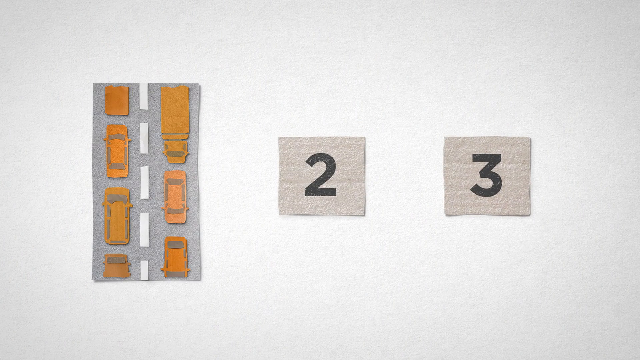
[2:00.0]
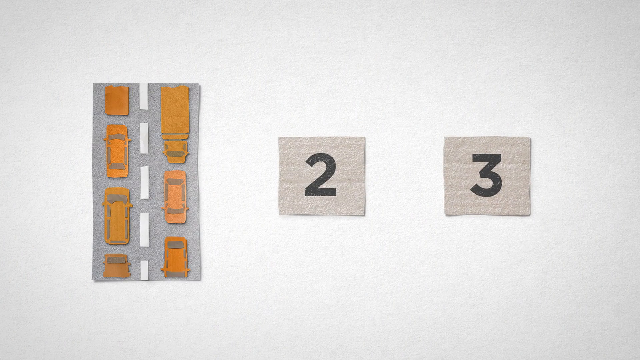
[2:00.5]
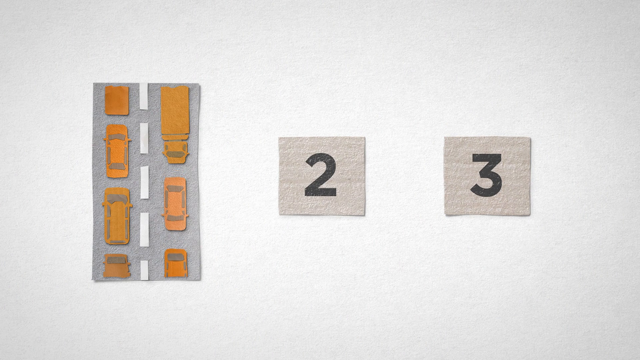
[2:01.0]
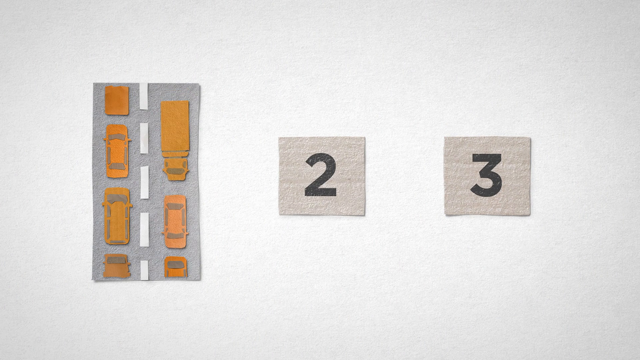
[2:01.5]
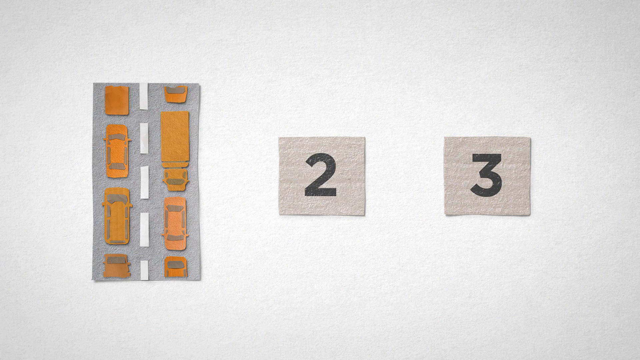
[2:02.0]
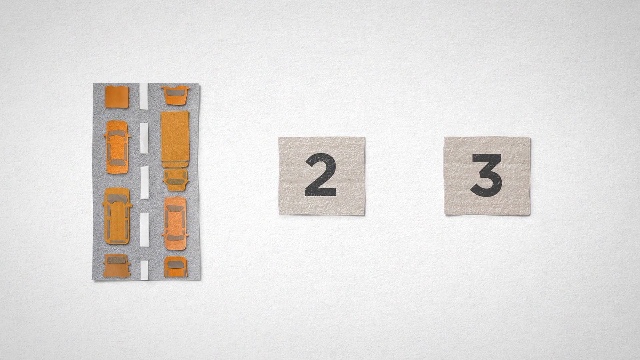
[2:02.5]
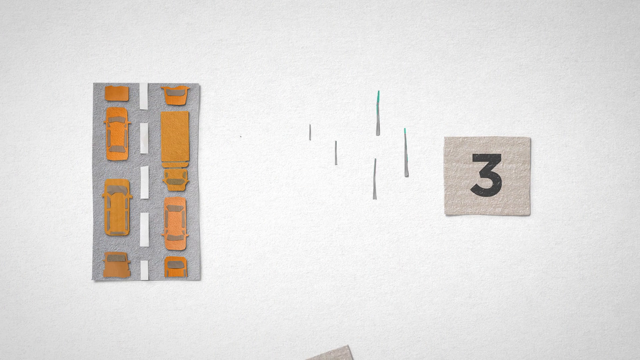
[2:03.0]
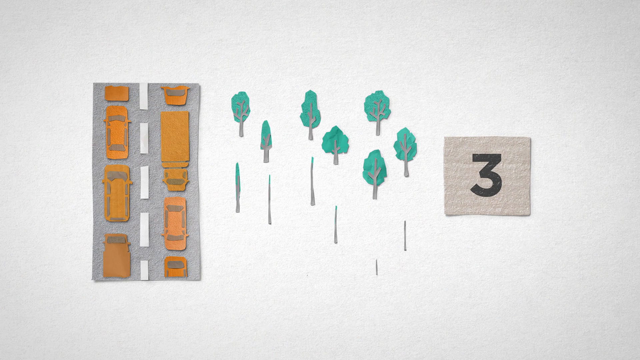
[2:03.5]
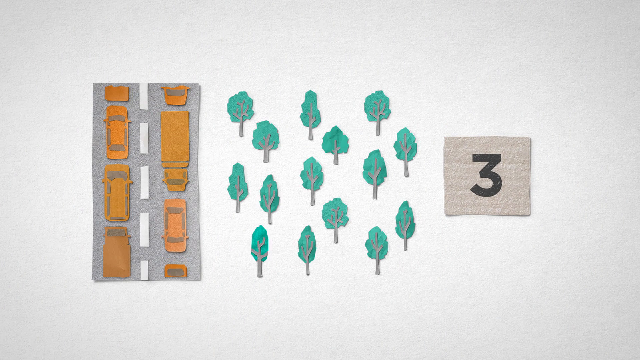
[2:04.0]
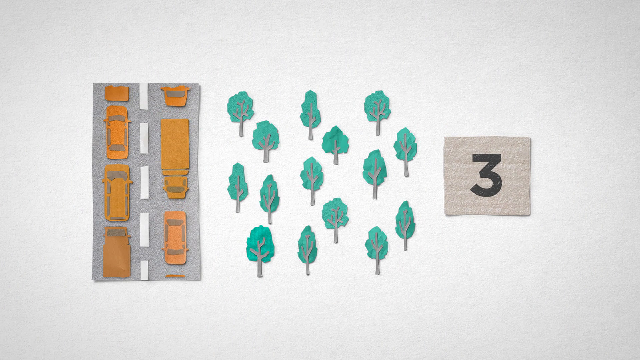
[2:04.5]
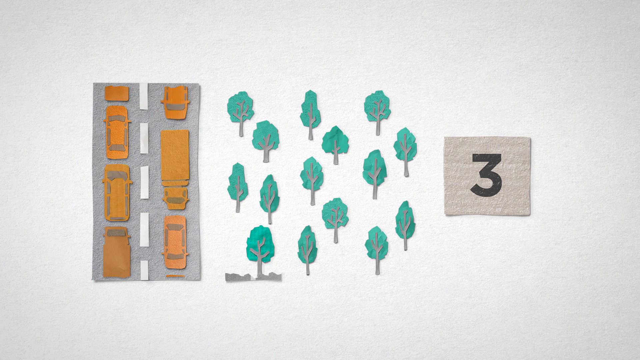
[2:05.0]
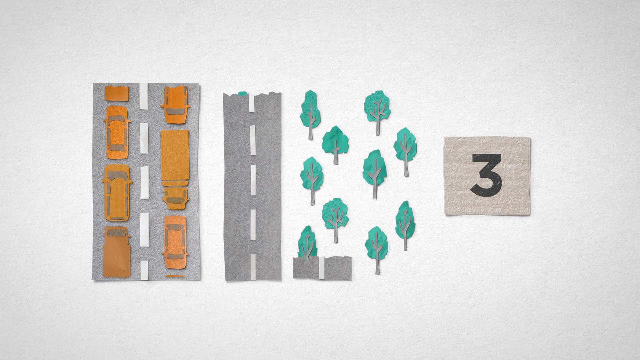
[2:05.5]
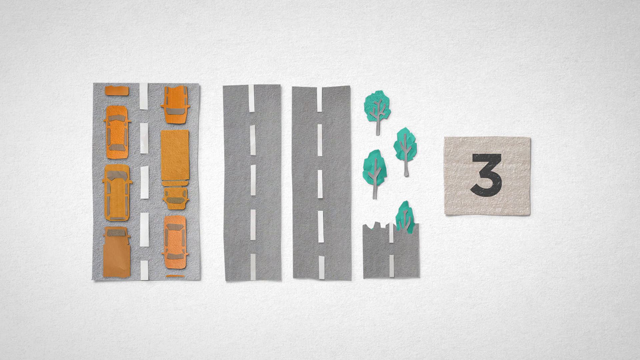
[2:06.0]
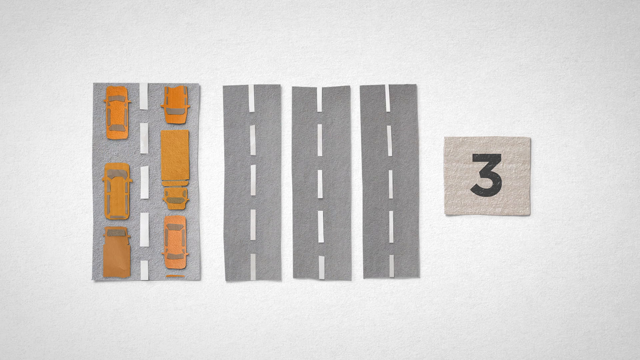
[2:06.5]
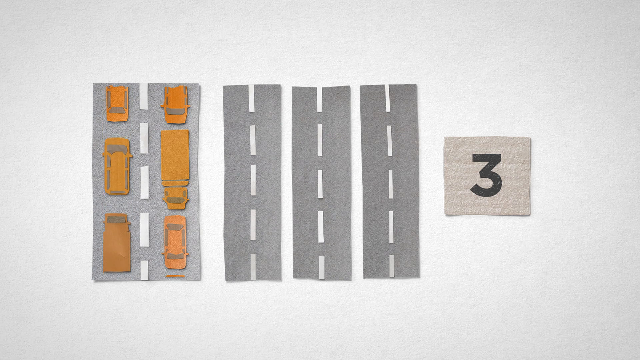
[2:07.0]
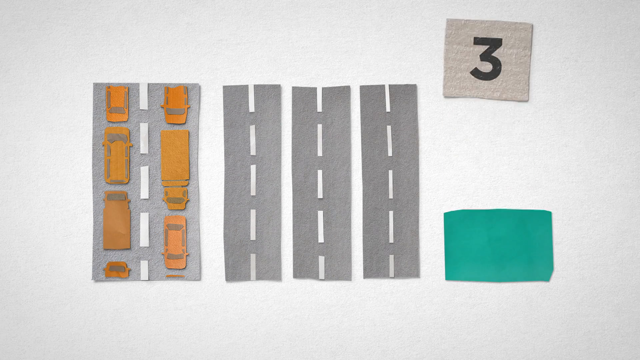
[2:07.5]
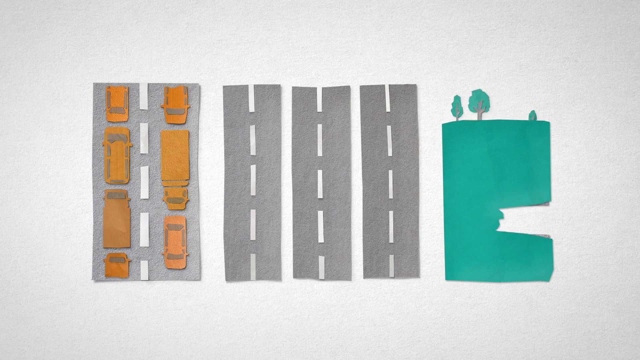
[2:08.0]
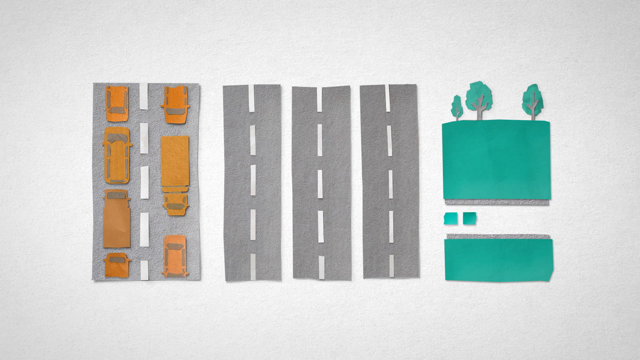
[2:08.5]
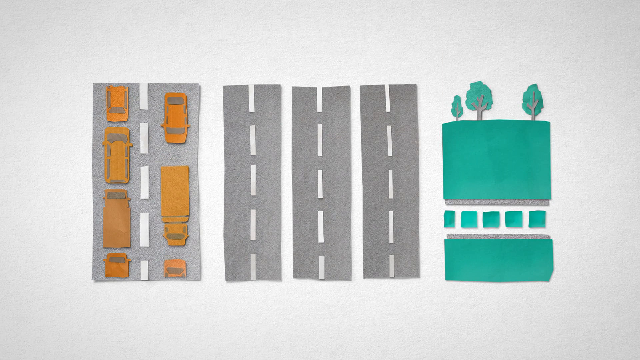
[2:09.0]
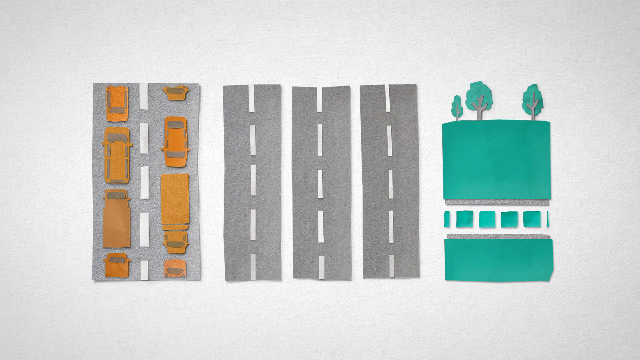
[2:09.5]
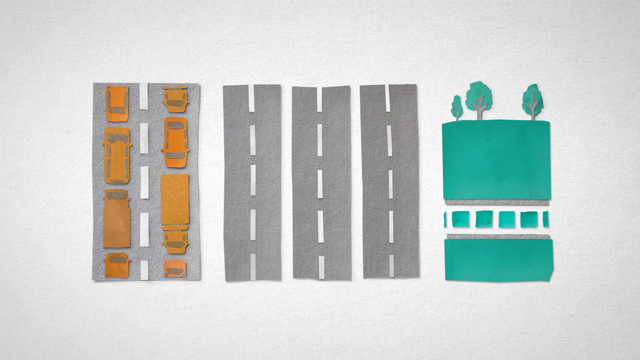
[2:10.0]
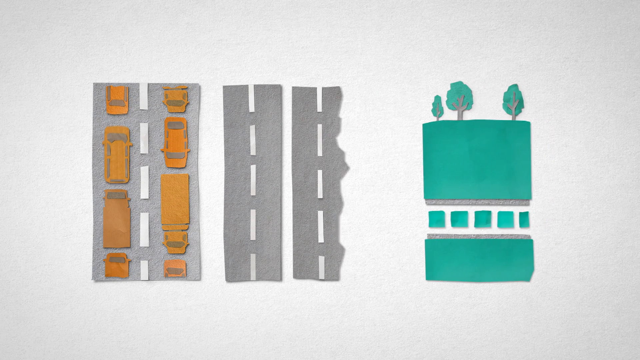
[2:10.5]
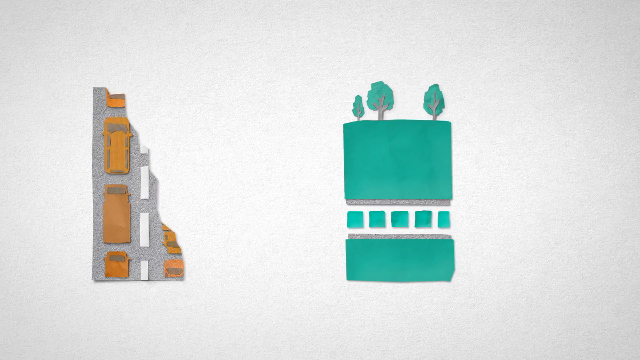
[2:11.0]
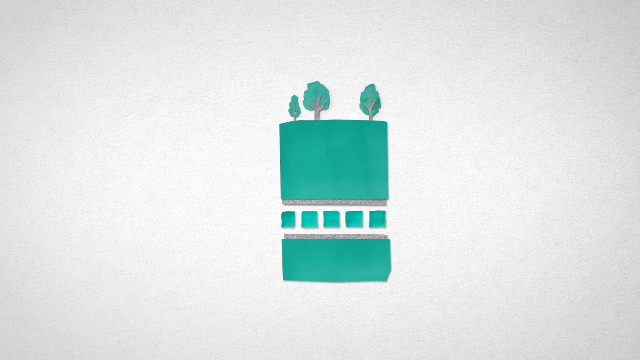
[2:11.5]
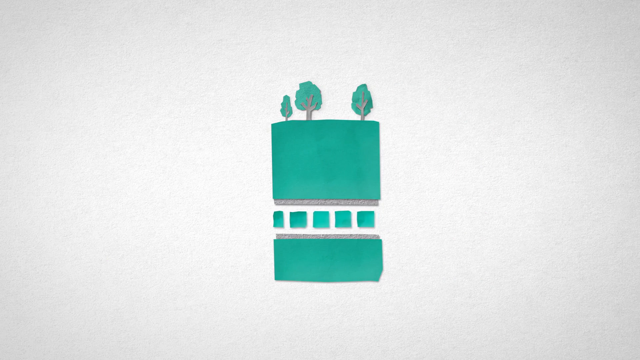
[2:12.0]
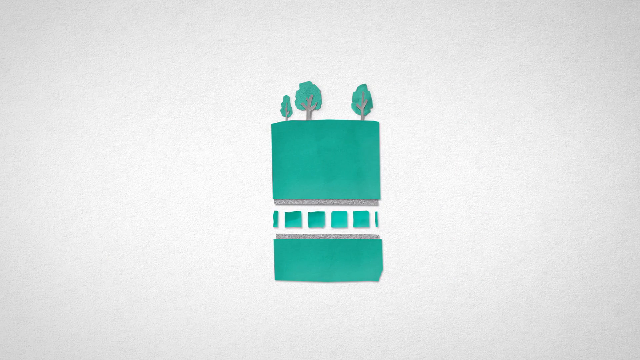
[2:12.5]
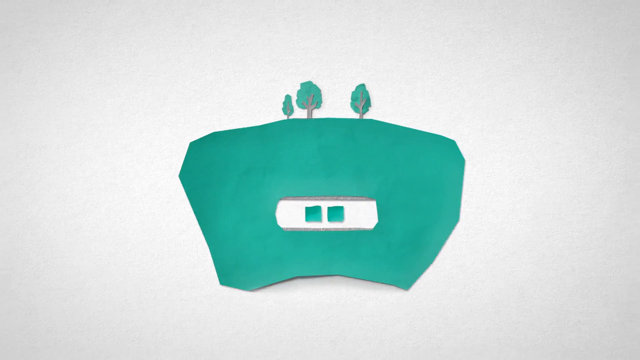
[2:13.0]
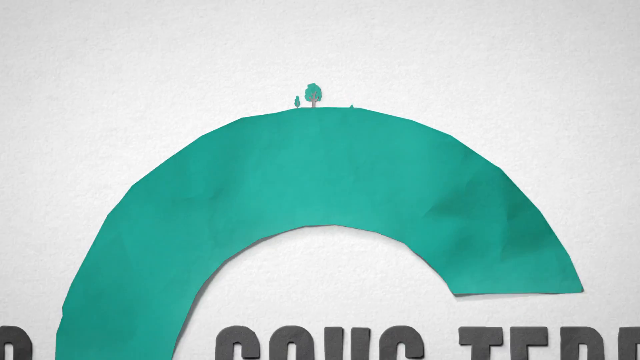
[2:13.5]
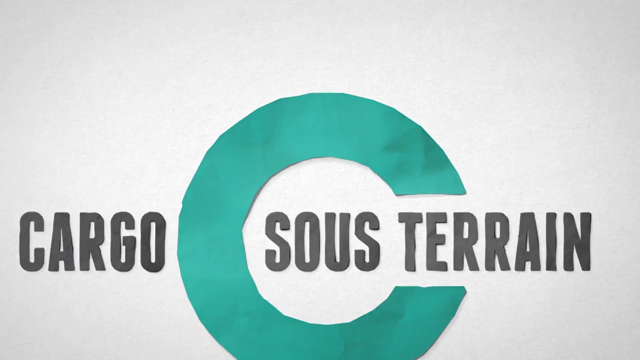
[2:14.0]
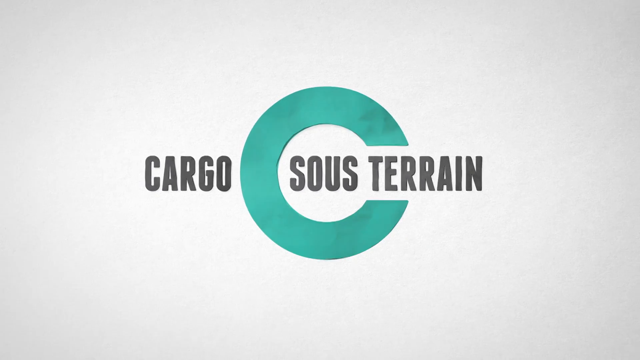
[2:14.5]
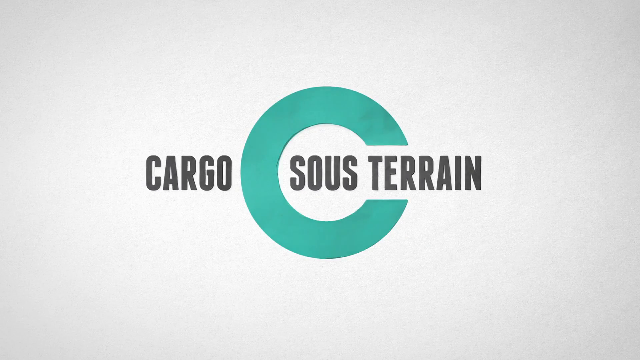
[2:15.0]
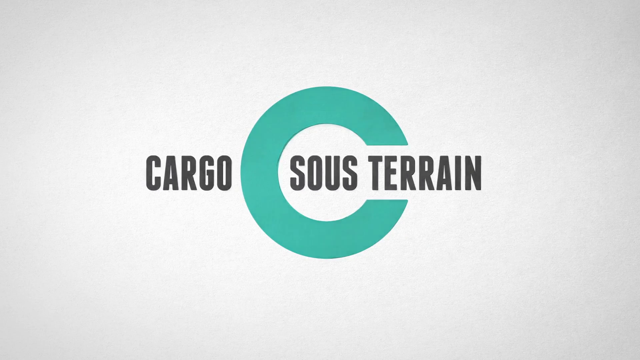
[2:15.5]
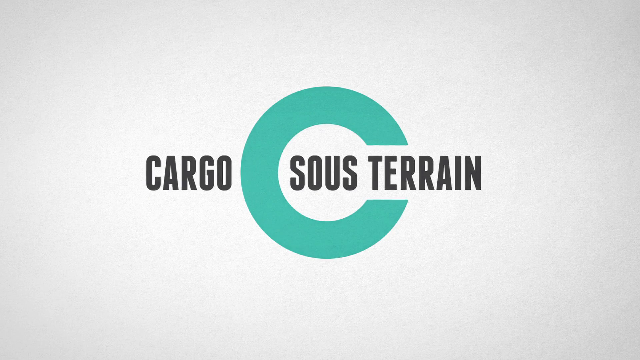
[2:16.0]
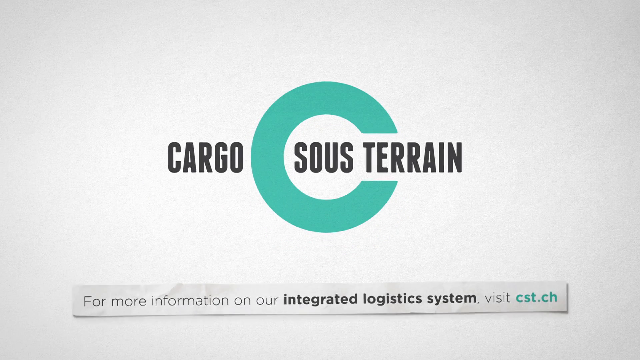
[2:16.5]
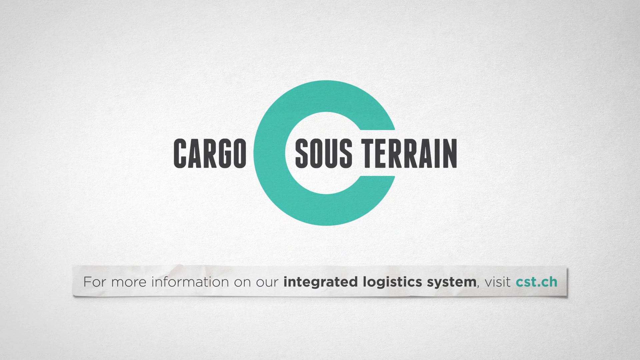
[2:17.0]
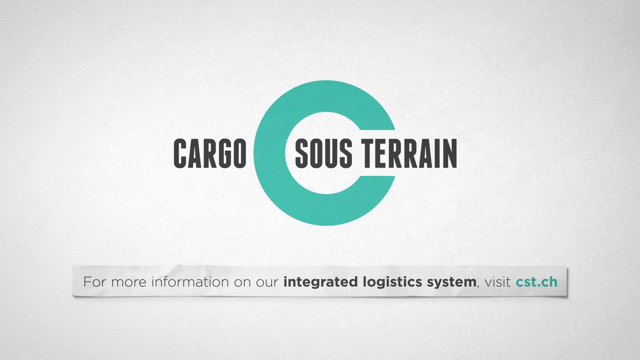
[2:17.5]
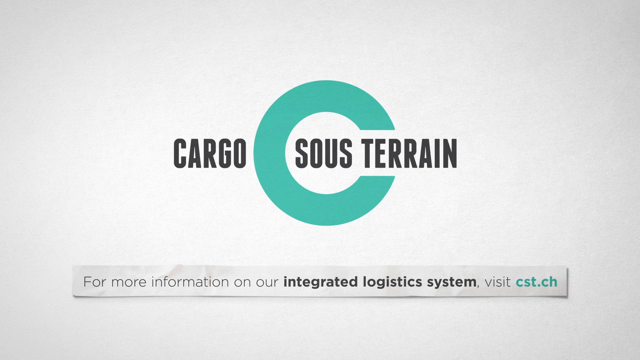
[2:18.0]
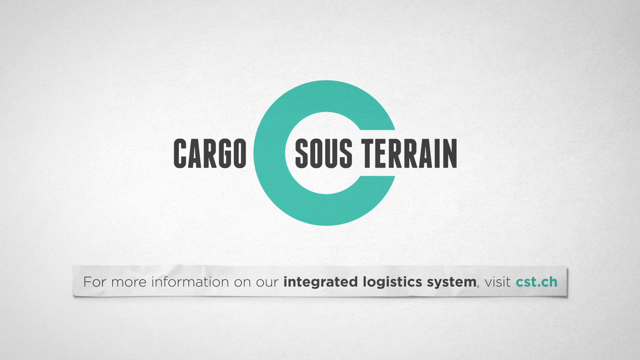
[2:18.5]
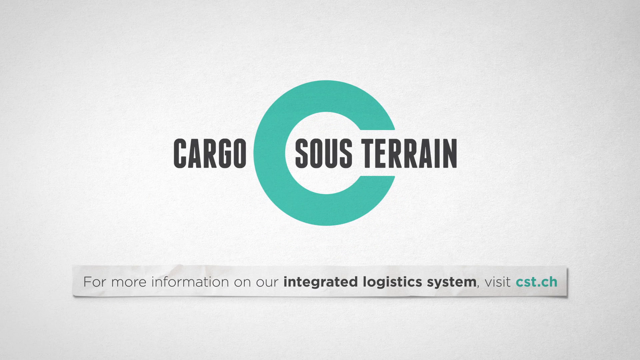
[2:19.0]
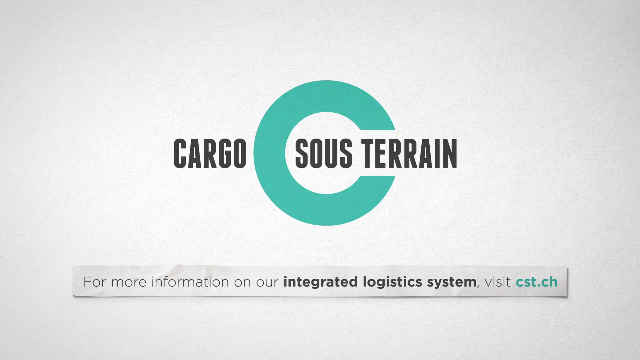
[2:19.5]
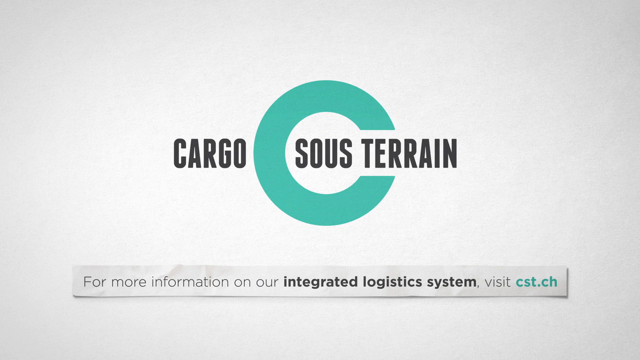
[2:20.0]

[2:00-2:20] A small section of a road is shown on the left with some cars and trucks on it, moving very slowly in a bit of traffic. The 2 then falls to the bottom of the screen and a bunch of trees appear, approximately 20, which then get covered by more roads. The number 3 disappears to the top of the screen, where there are a couple of trees and little blue/teal squares moving through a single passageway, with a lot of teal background. The teal background fades into the logo again, which says "Cargo Seuss Terrain", and the paper effect disappears, becoming a very flat effect. Then the words "for more information on our integrated logistics system visit cst.ch" appear on a paper banner, with "integrated logistics system" in bold and "cst.ch" bold and in teal.